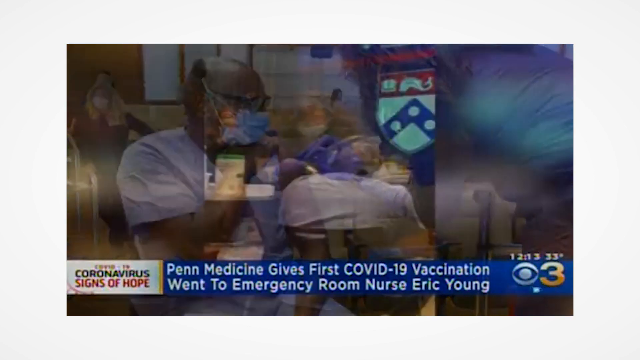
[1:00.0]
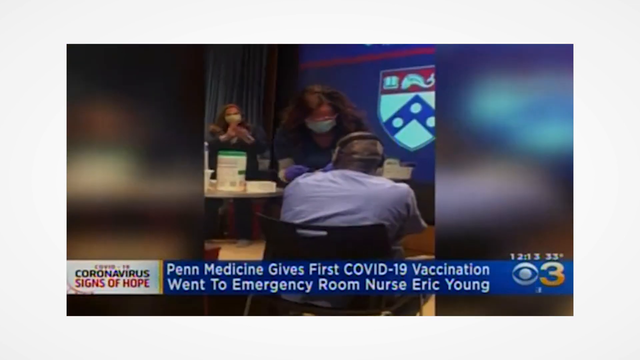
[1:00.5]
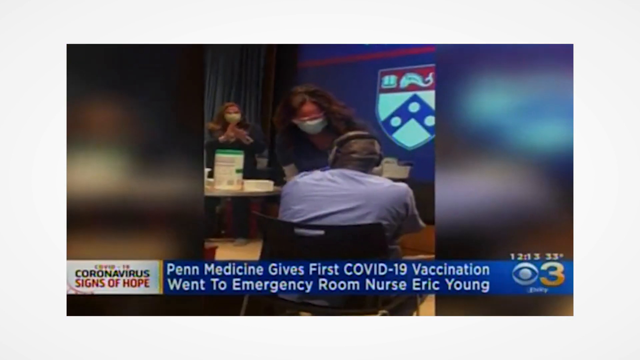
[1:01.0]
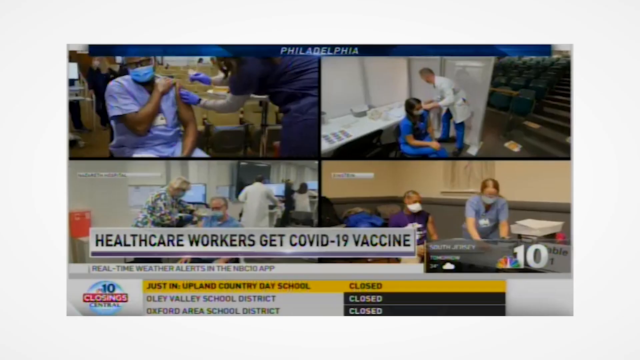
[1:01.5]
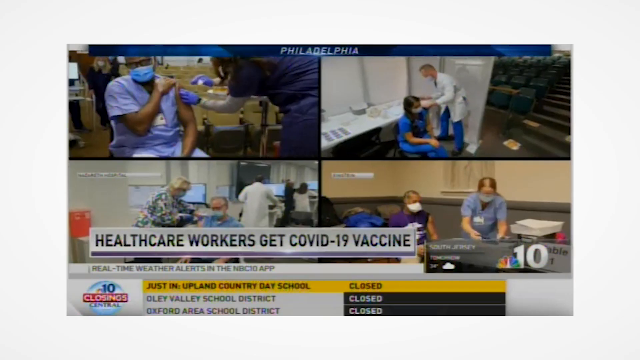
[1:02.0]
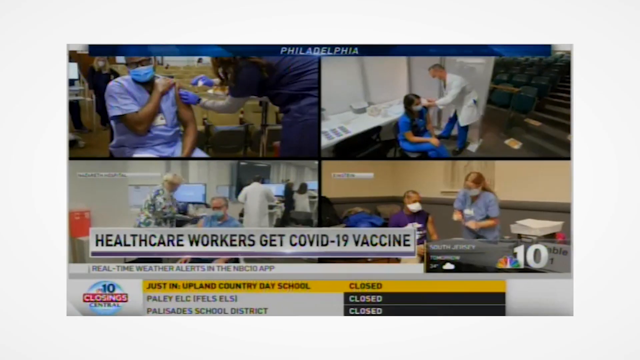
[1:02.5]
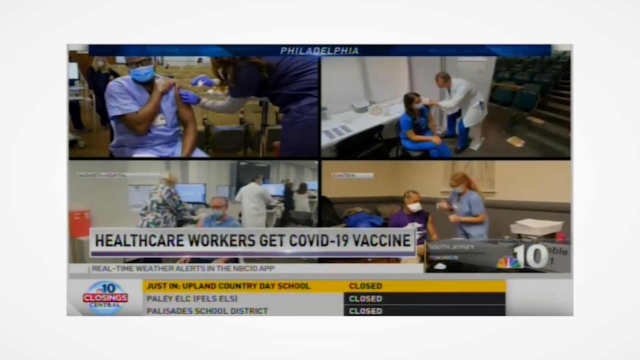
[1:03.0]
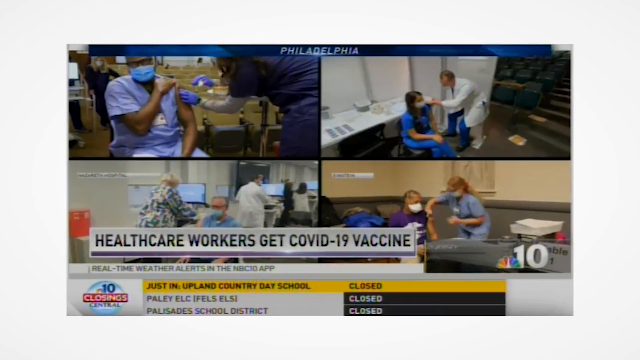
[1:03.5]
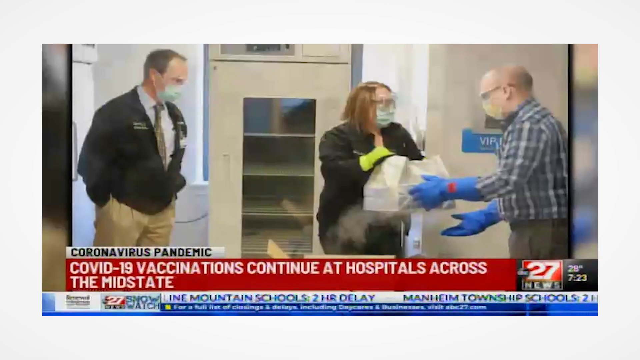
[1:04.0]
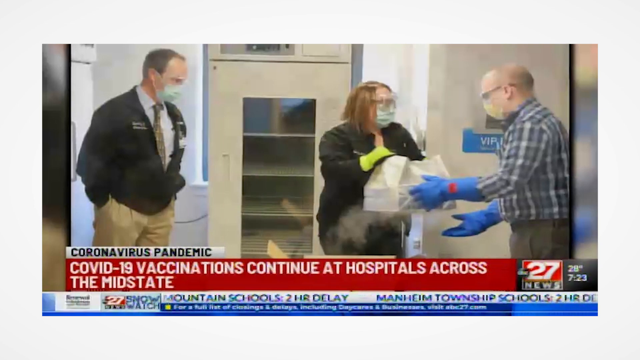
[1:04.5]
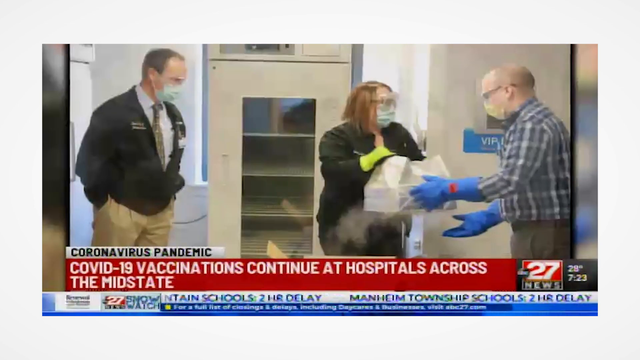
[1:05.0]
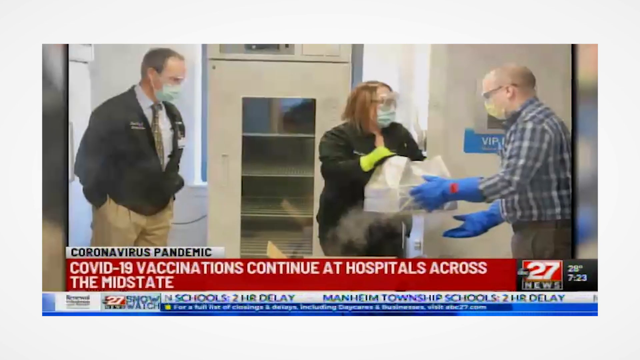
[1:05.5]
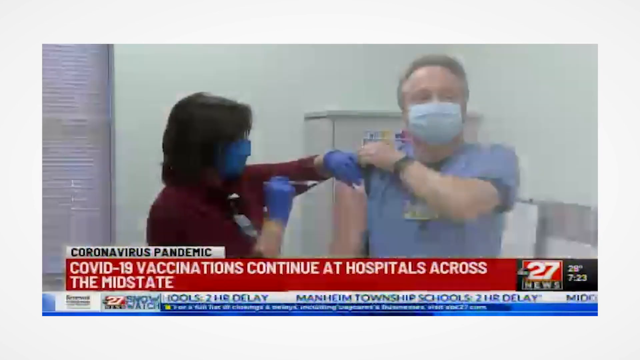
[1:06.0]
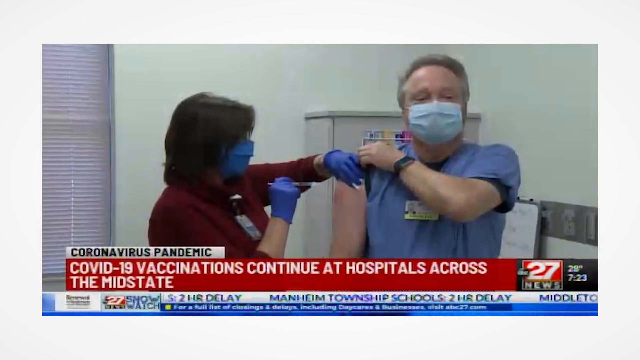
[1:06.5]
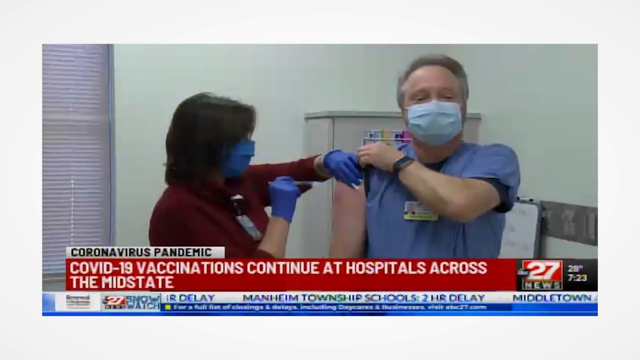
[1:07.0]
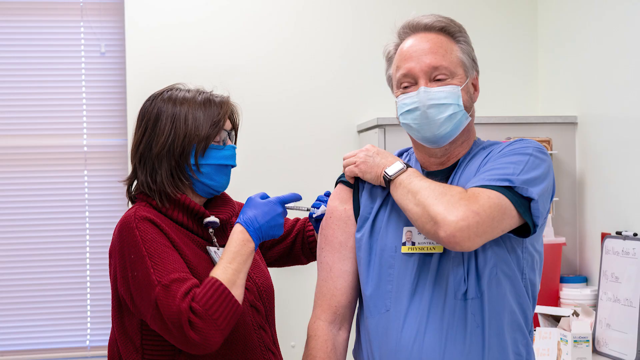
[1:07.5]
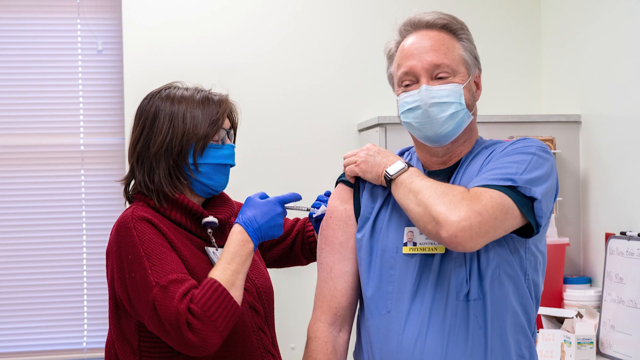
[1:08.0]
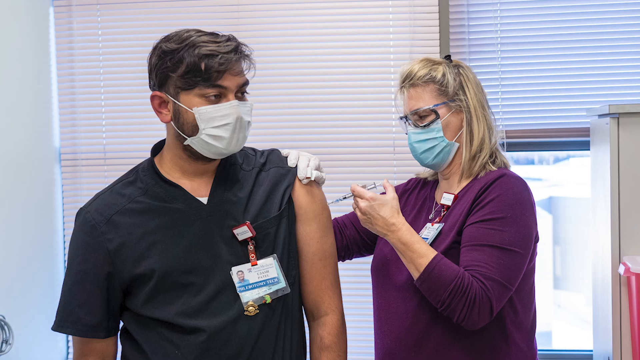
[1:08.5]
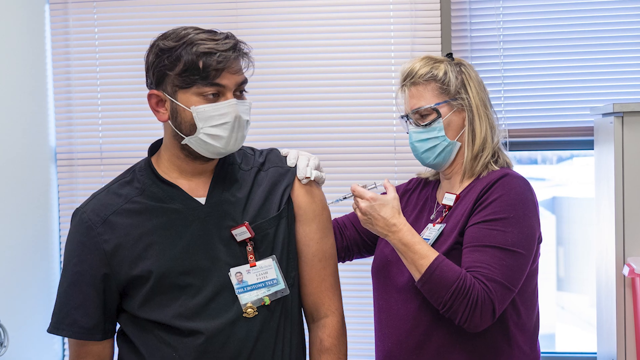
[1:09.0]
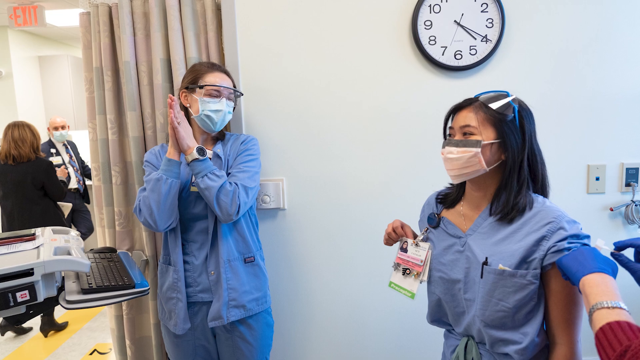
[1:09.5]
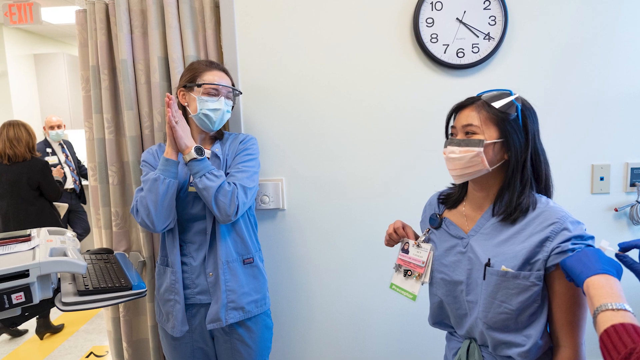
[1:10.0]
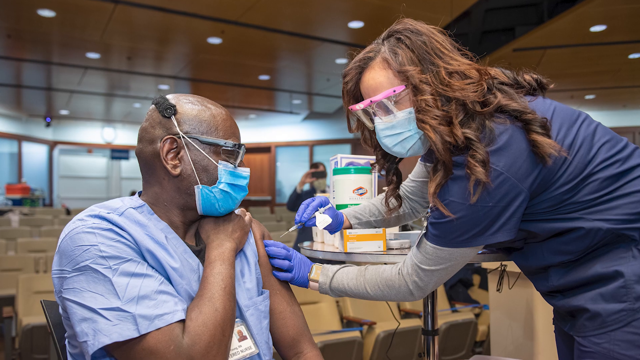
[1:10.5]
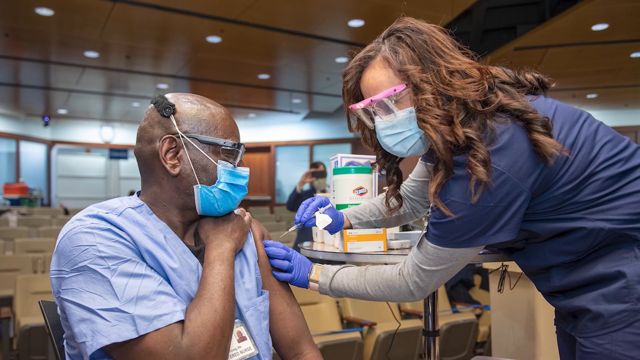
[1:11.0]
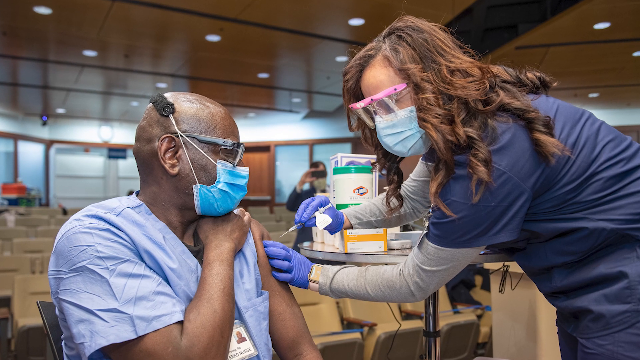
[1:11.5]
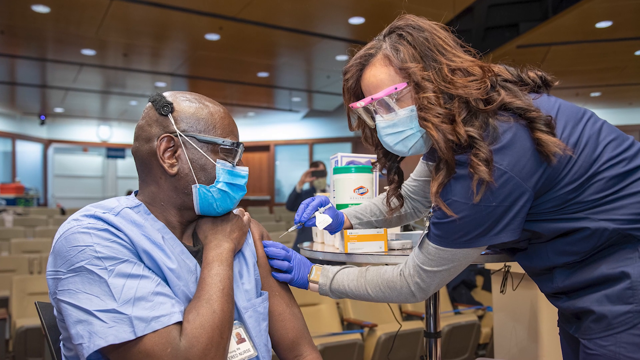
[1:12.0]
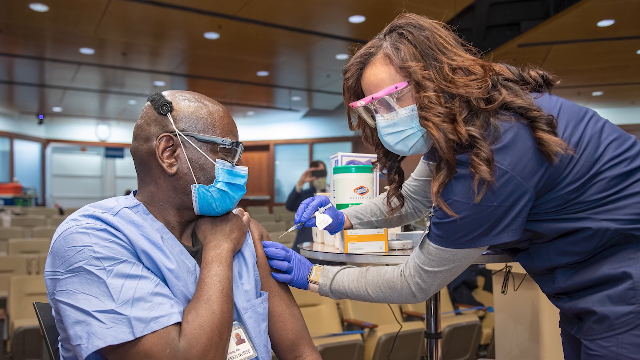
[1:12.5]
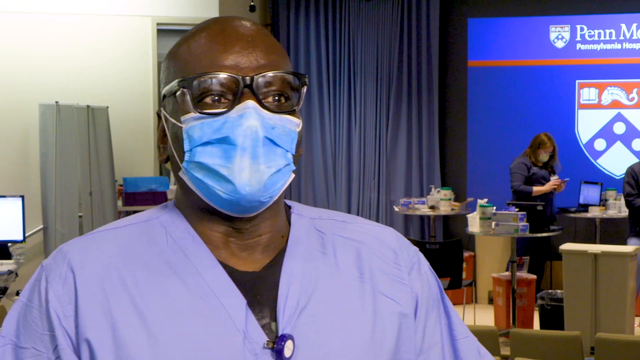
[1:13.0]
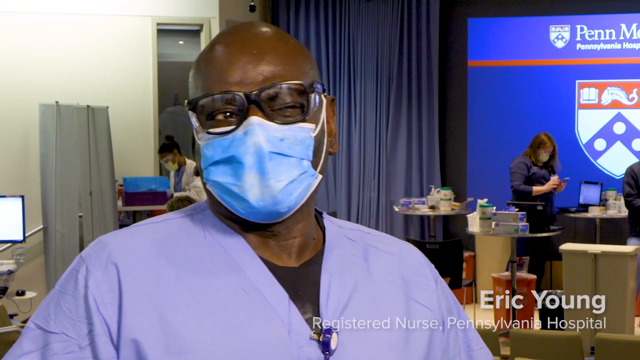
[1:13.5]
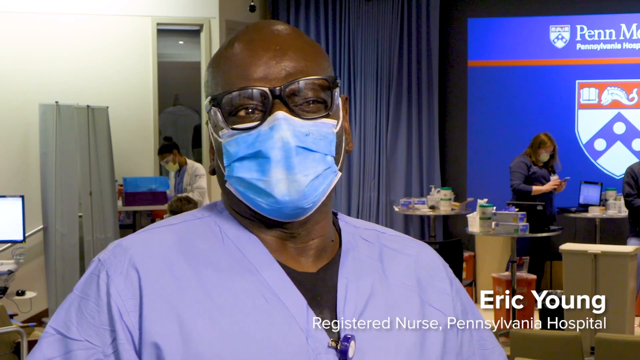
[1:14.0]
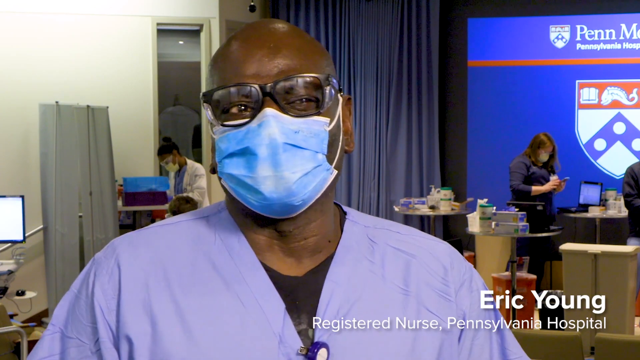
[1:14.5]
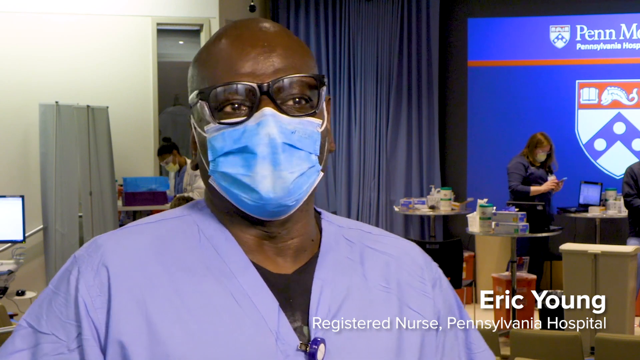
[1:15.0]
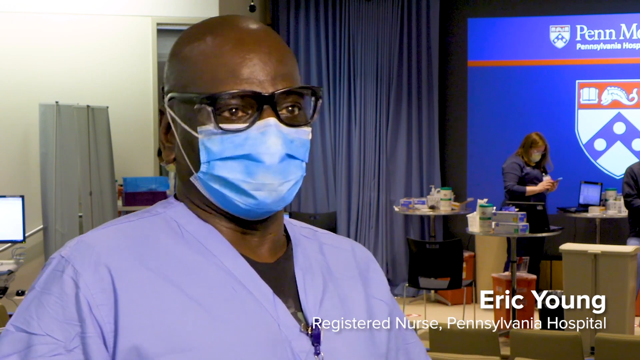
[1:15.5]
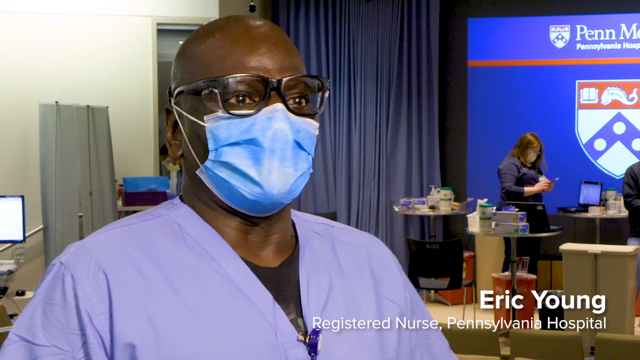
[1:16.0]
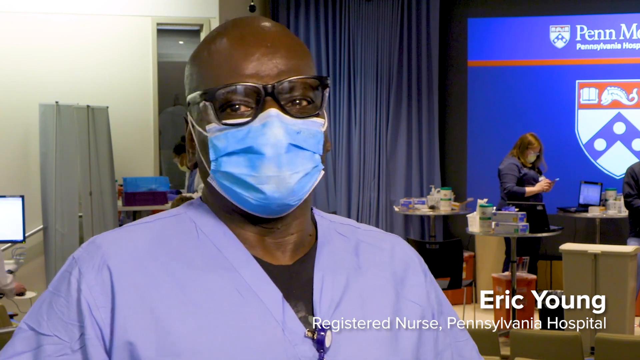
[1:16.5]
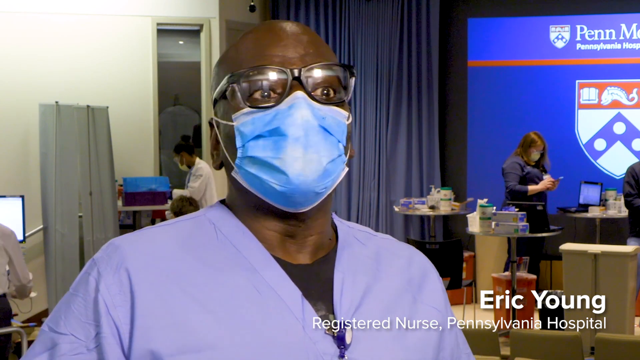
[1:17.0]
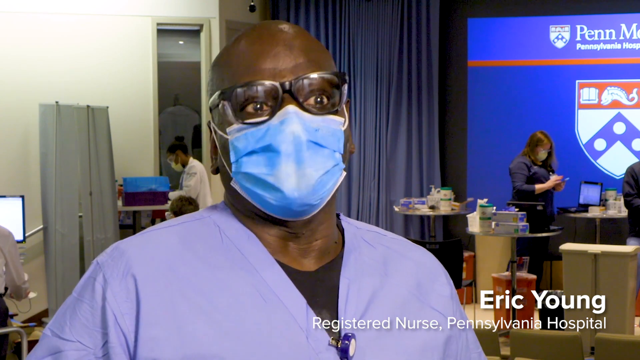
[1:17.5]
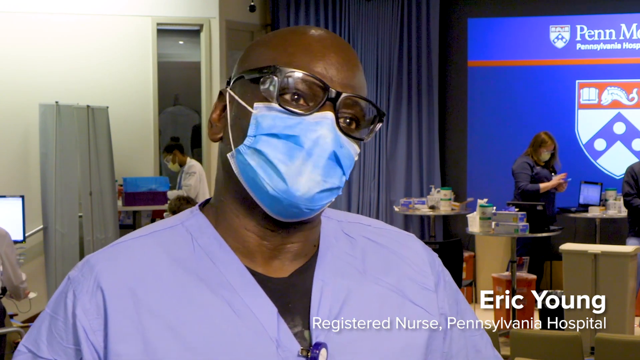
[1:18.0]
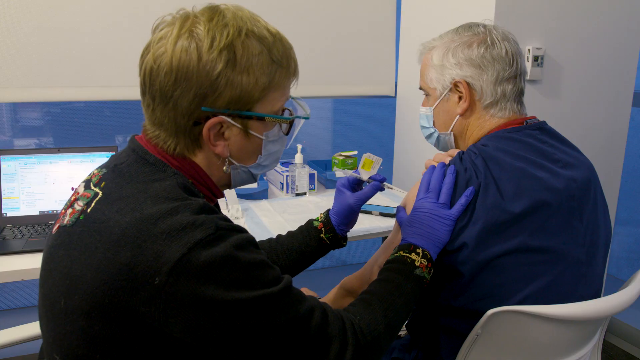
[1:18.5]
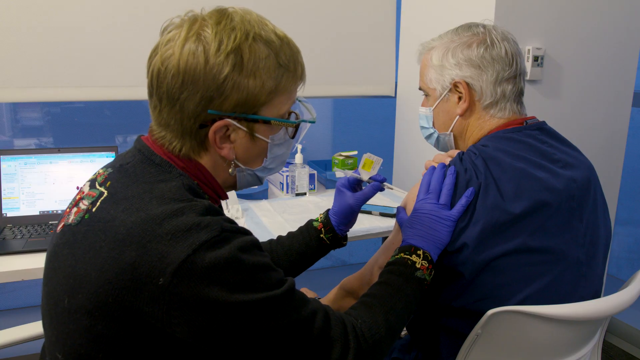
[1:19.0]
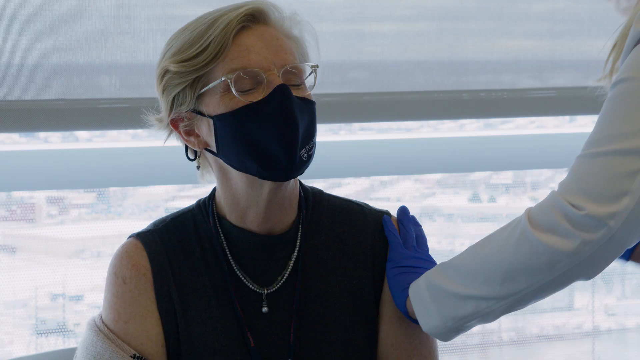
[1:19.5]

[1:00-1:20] What appears to be a Channel 3 news item begins, with a headline at the bottom of the screen reading "Penn Medicine gives first COVID-19 vaccination", naming emergency room nurse Eric Young as the recipient. He is the man whose back was seen as he received the injection from a nurse or perhaps a doctor. Still within the news item, judging by the on-screen layout, the screen splits into four quarters, each showing a different person. Judging by their uniforms, they appear to be staff members receiving the vaccine, all in the classic pose: the patient sits with a sleeve rolled up while a professional gives the injection. A headline reads "health care workers get COVID-19 vaccine". More still photographs on the same theme follow, showing needles in arms, with patients sitting and hospital technicians or professionals giving the vaccine. Eric Young then appears to be interviewed in a room almost like a lecture room. A screen in the background is large, almost ceiling to floor, and shows the Penn Medicine logo. A couple of technicians and nurses are in the background, along with a couple of hospital screens not in use. Eric Young is a black man wearing glasses, a mask and scrubs. In a head-and-shoulders shot, he seems fairly happy as he talks.